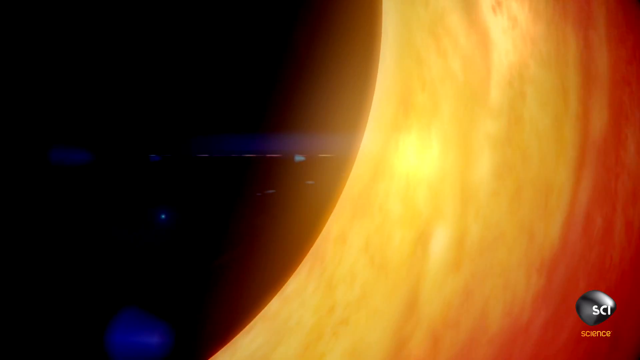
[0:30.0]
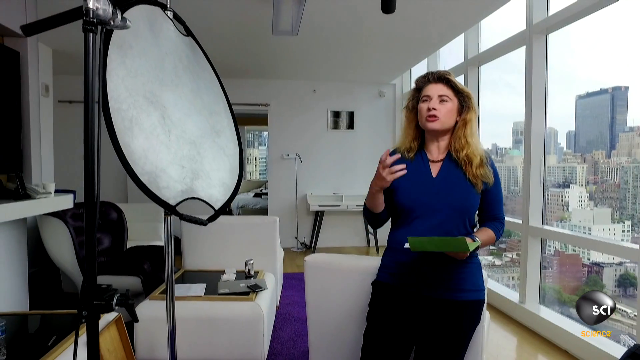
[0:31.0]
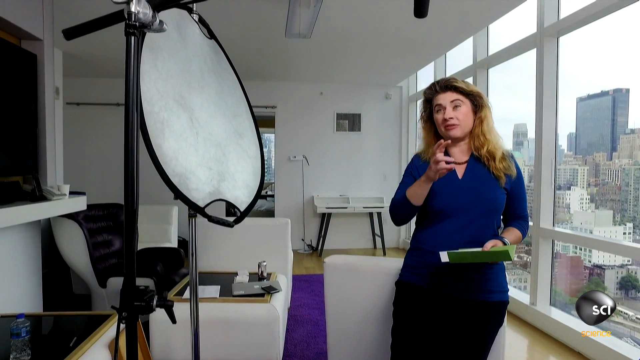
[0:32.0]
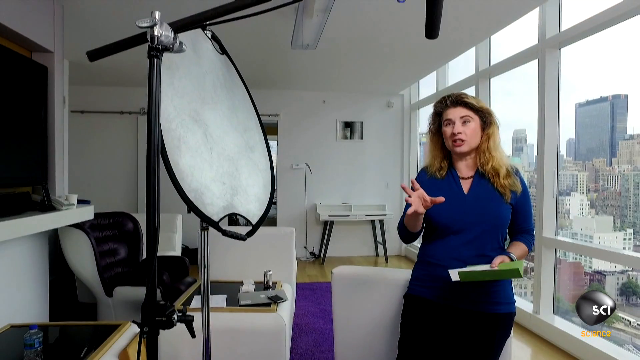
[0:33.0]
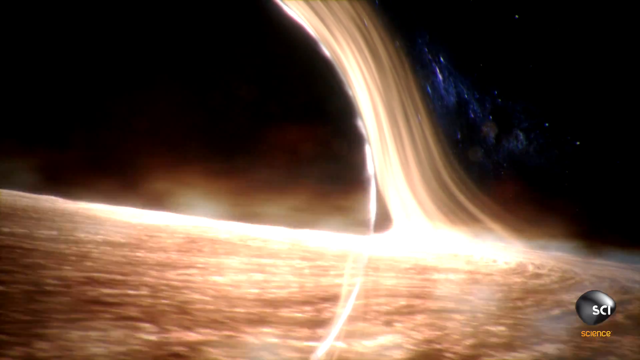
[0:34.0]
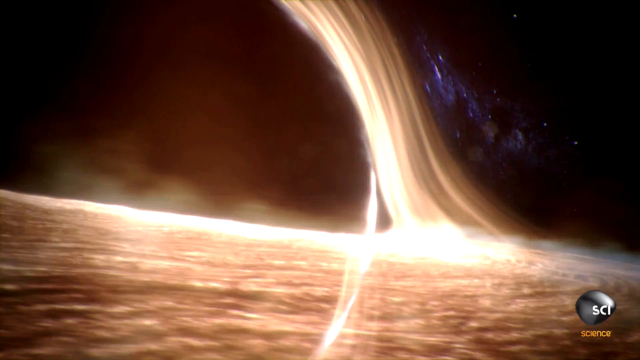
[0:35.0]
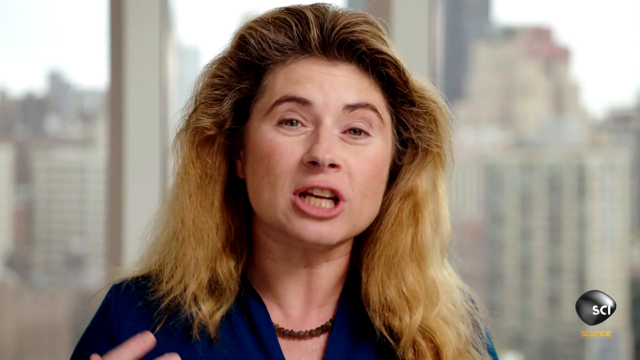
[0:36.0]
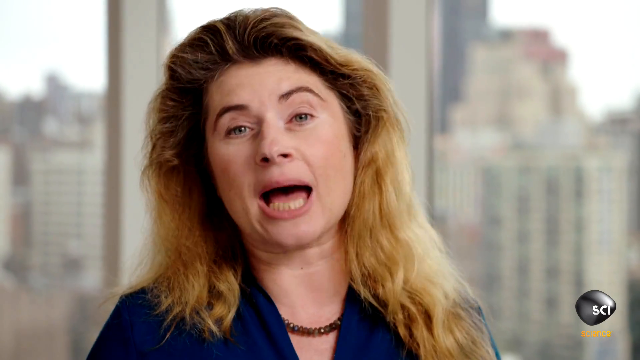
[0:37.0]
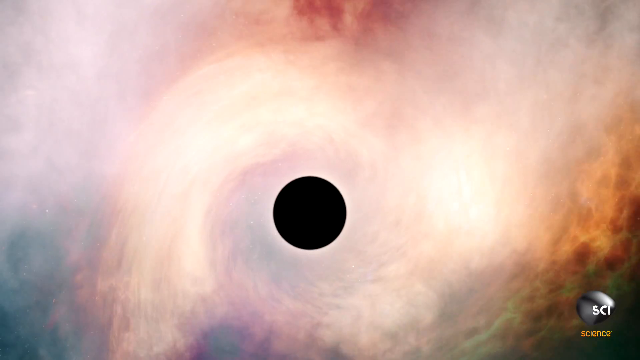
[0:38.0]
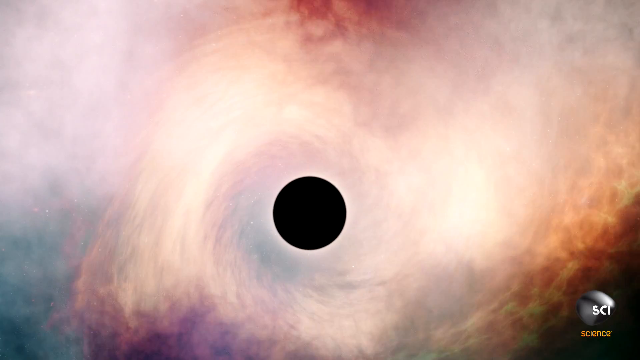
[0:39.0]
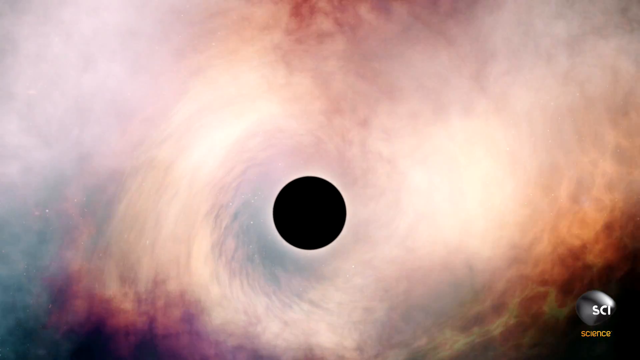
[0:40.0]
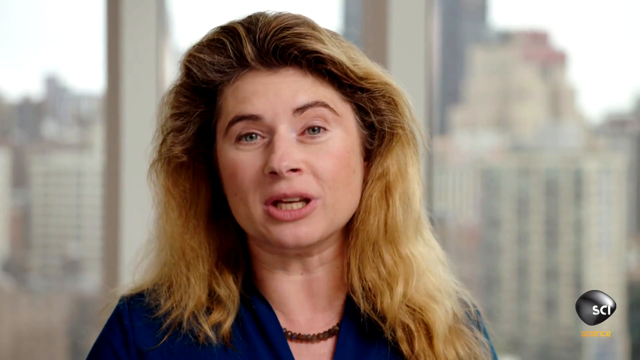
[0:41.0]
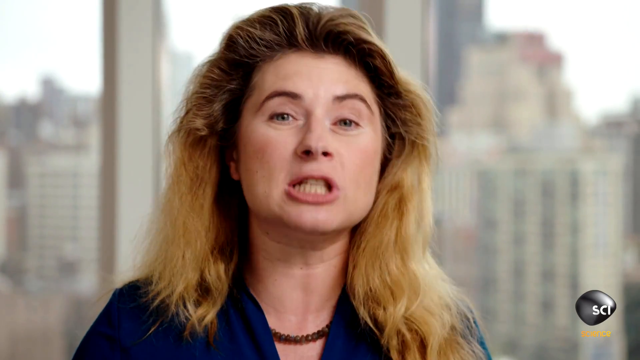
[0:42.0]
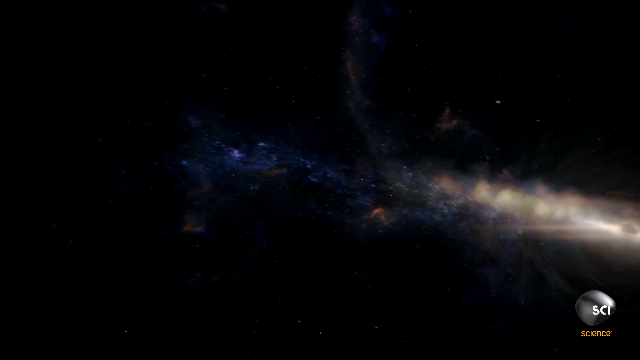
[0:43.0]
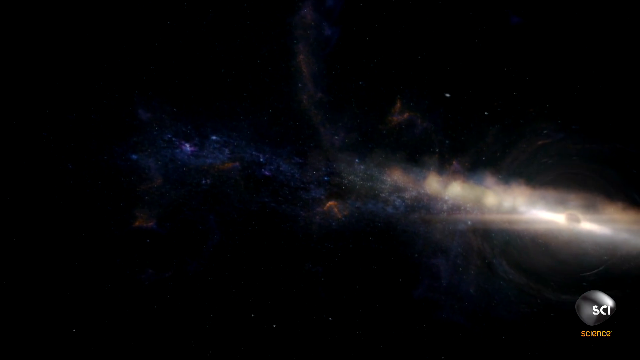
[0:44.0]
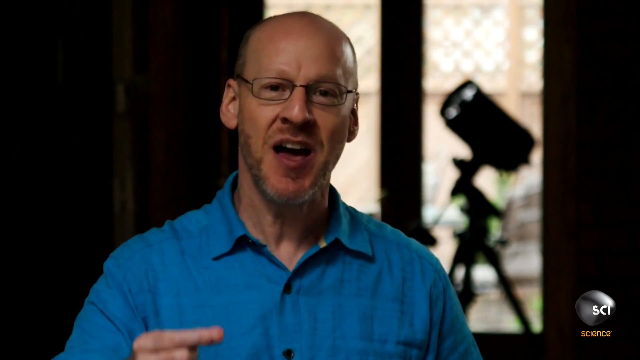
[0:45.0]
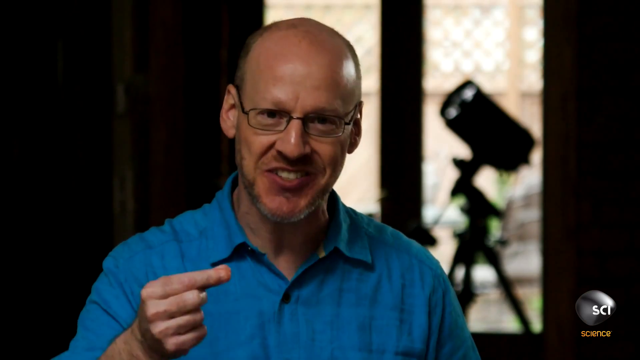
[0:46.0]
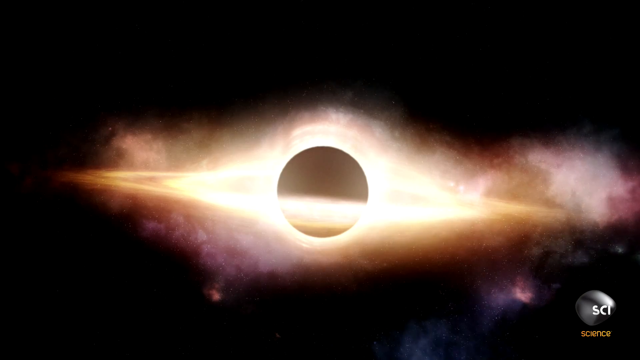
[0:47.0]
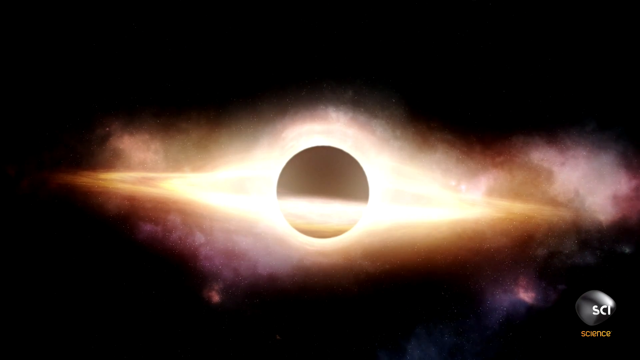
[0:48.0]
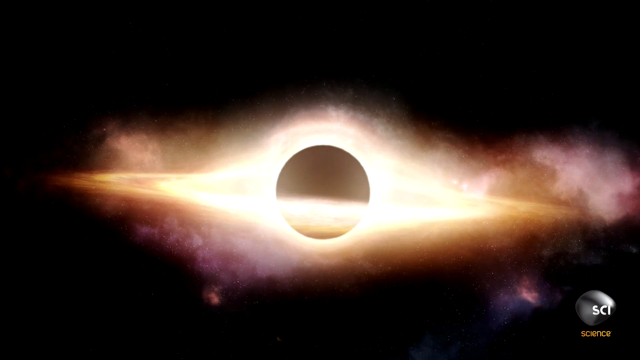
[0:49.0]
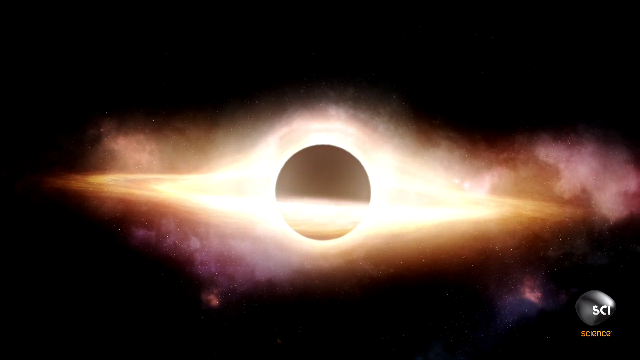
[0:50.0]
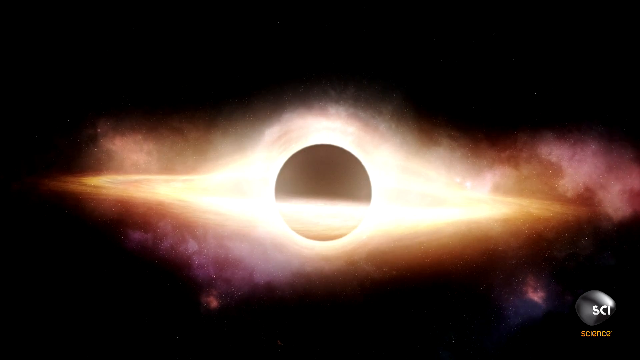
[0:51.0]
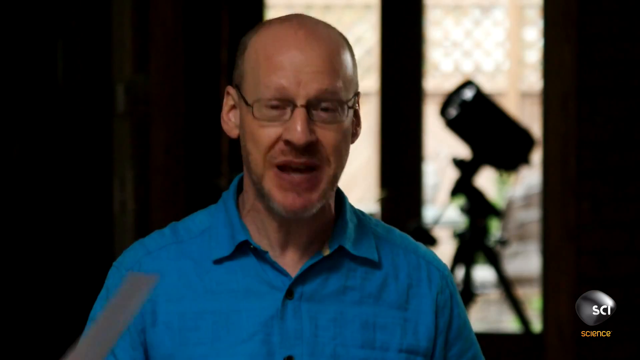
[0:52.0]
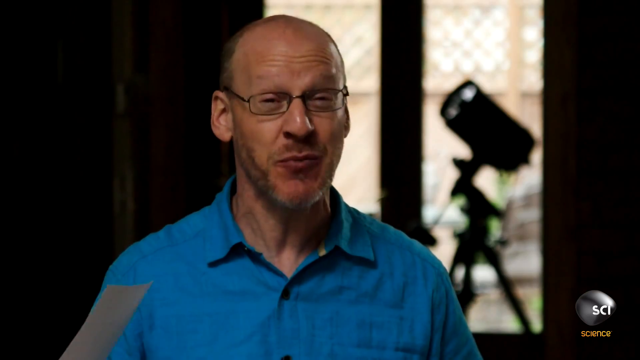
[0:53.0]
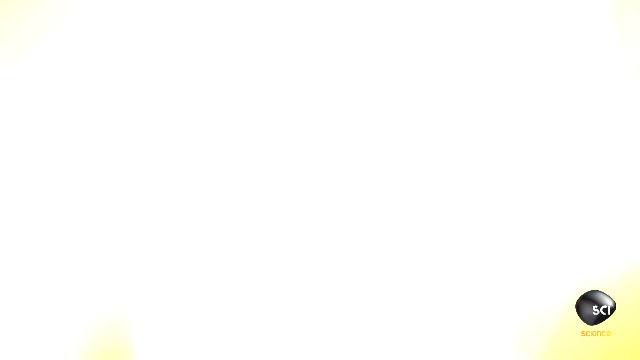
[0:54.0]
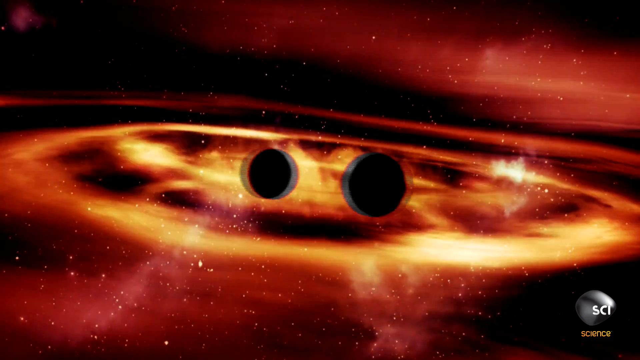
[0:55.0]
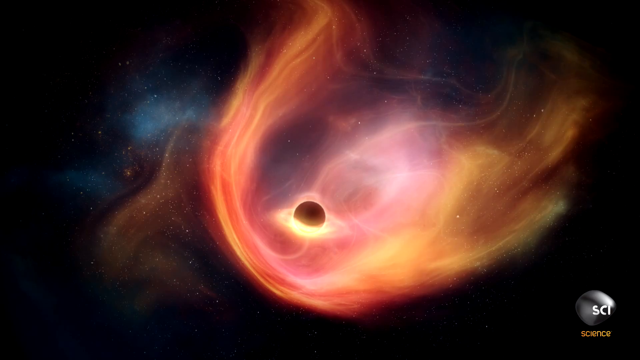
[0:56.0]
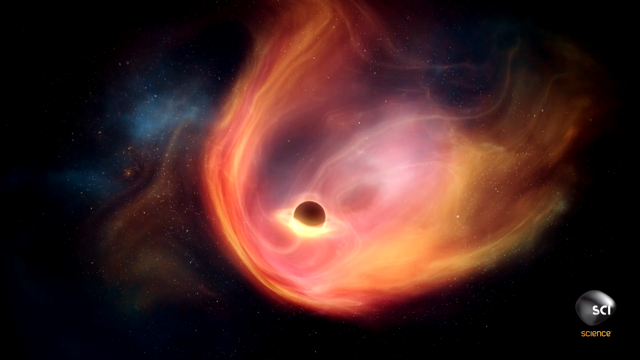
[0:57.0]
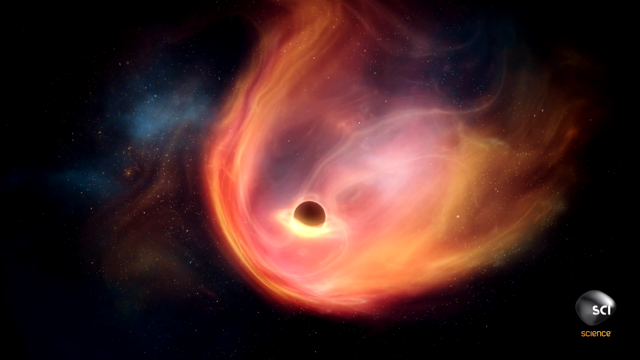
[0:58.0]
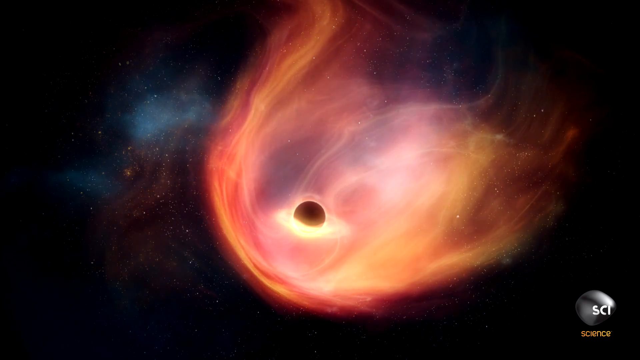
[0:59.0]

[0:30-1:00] The right side of a black hole is shown: its central mass is black, while the forces swirling at its edges glow yellow and orange. The video shifts to a woman in a modern office overlooking the city. She wears a blue dress and a necklace and holds a green envelope in her left hand. Facing slightly to the left of the camera, she points with her right hand, then speaks while spreading her fingers and waving her right hand back and forth. The camera pans back and to the left to reveal more of the woman and the room. Next comes a 3D-generated view of the side or edge of a black hole, with glowing dust or particles flashing across the bottom of the screen as the black hole's force seems to rotate counterclockwise. A close-up follows of the same woman, who has red hair and faces the camera with the city skyline visible through the window behind her; she speaks, nodding her head with each word. Another 3D-generated black hole appears, with red, pink and blue cosmic gases in the background swirling into the black hole at its center. The video returns to the red-haired woman speaking toward the camera, then shows a black hole on the left side of the frame. The man in the blue shirt with glasses raises his right hand as he speaks, bringing it up and down and closing his fist to emphasize each point. Another illustration shows a black hole in space, with the energy around it growing and spreading slowly through the surrounding darkness. The bald man in the blue shirt smiles and waves the white piece of paper in his right hand. Several examples of black holes in space are shown, and then the video switches back to the man in the white shirt.